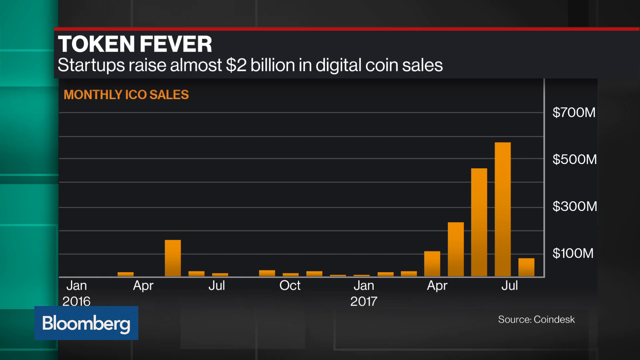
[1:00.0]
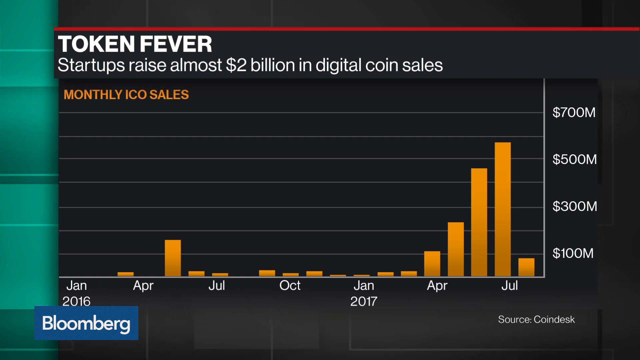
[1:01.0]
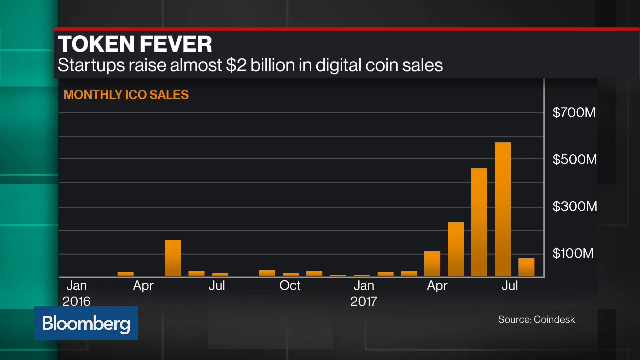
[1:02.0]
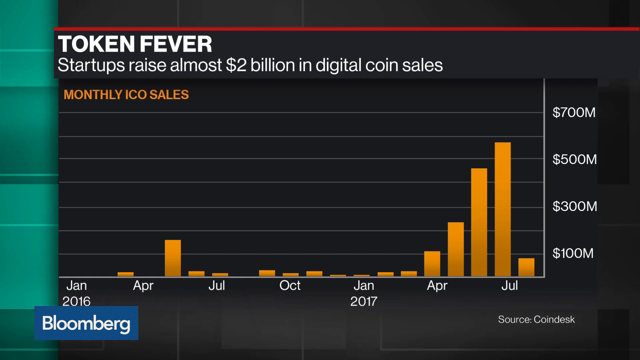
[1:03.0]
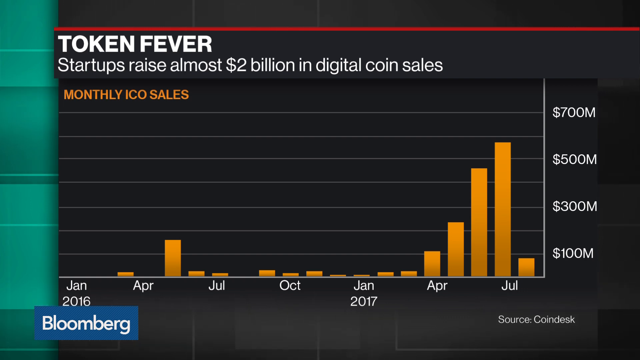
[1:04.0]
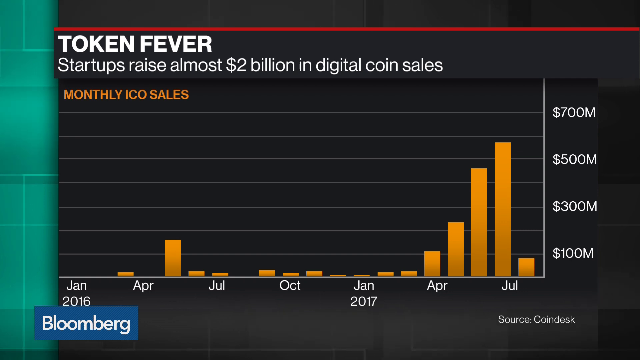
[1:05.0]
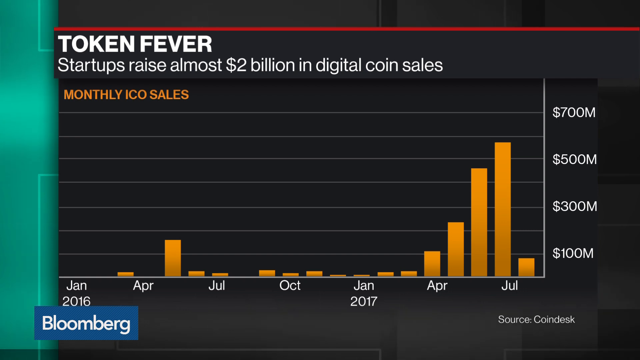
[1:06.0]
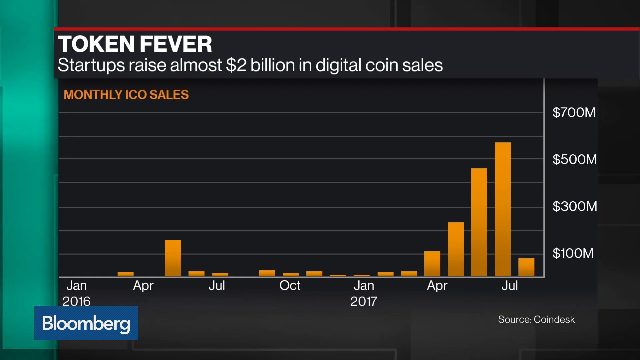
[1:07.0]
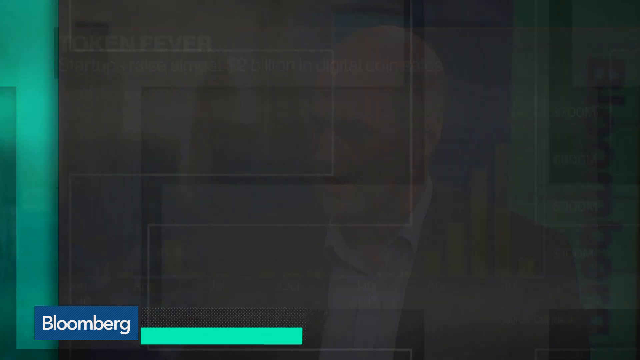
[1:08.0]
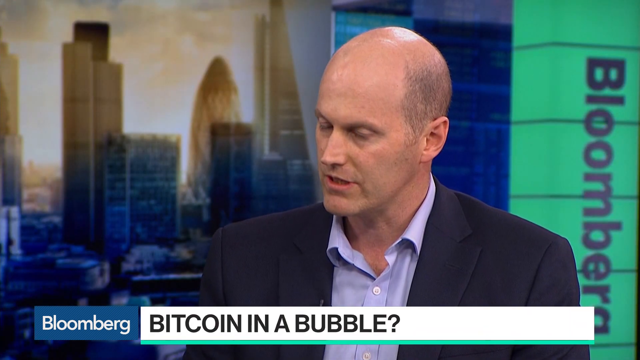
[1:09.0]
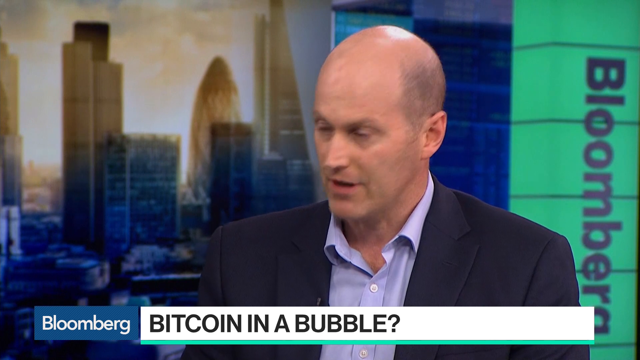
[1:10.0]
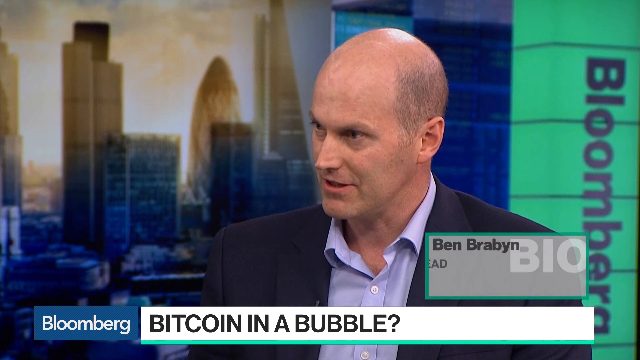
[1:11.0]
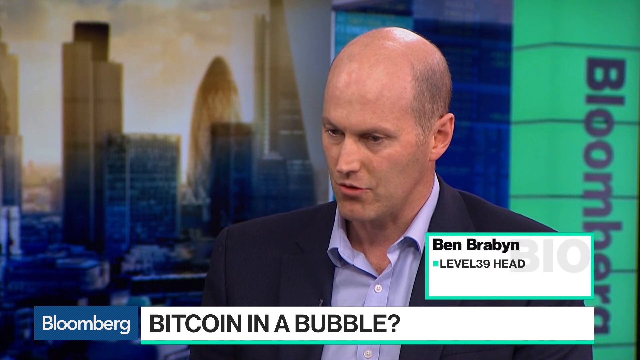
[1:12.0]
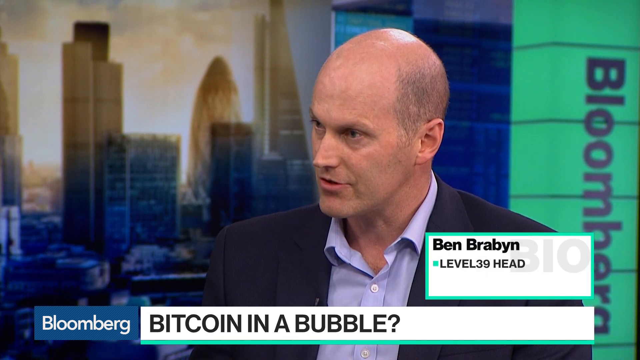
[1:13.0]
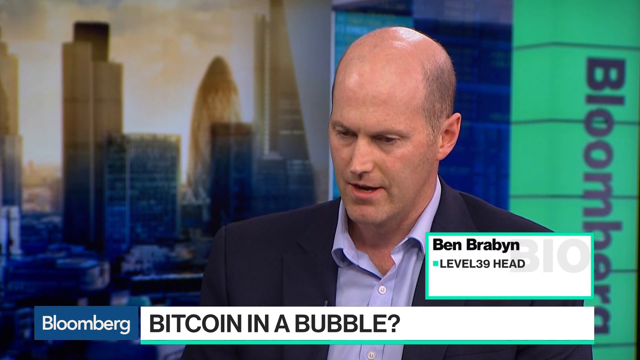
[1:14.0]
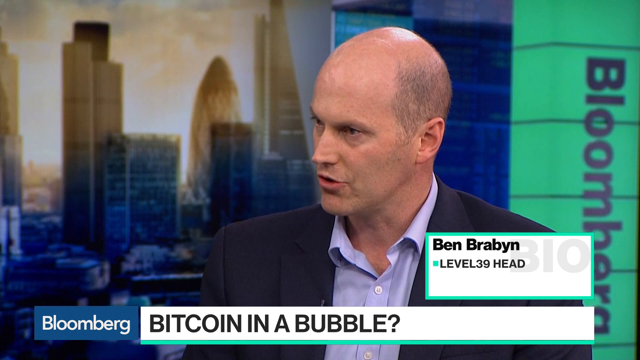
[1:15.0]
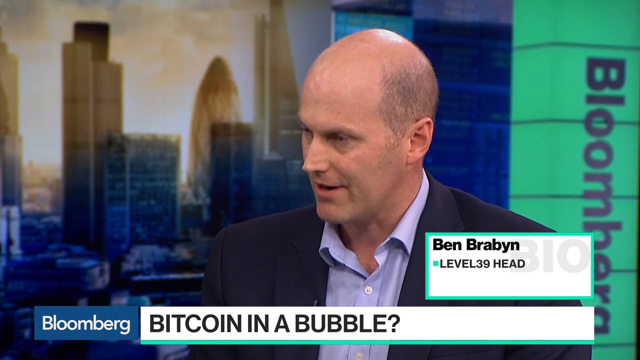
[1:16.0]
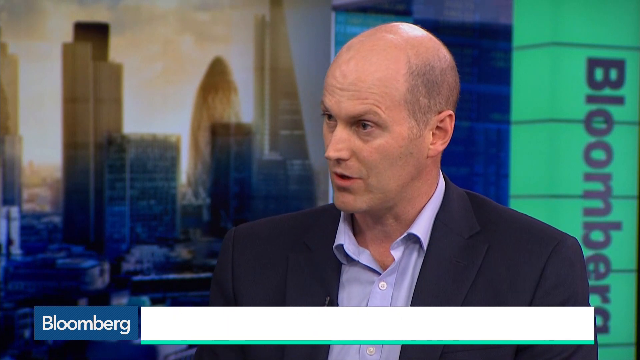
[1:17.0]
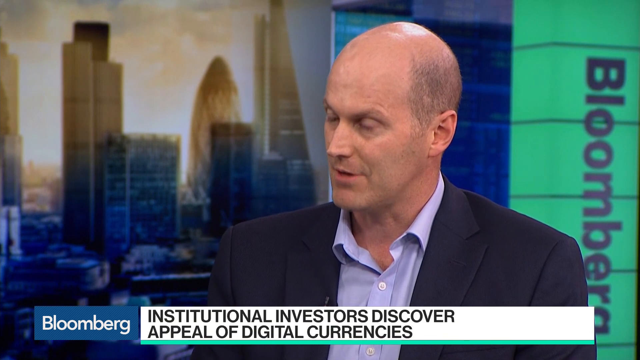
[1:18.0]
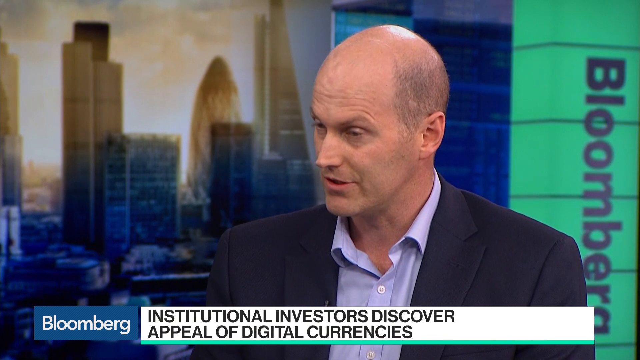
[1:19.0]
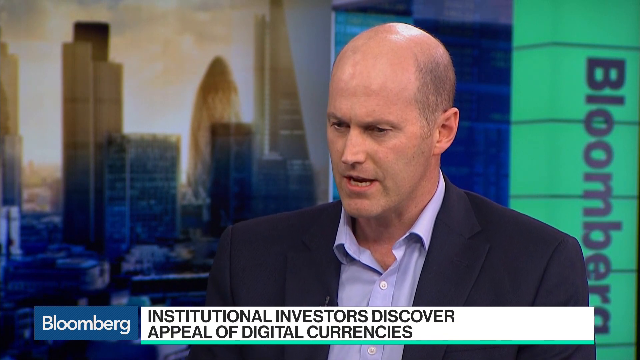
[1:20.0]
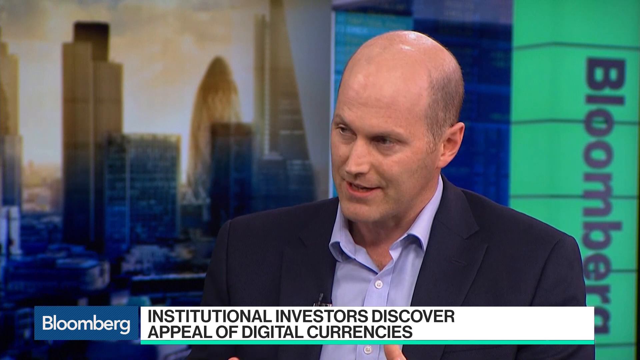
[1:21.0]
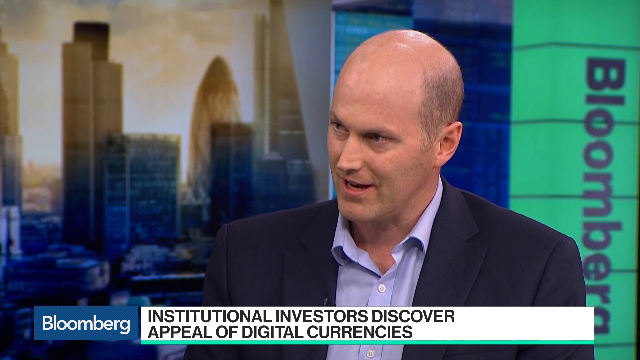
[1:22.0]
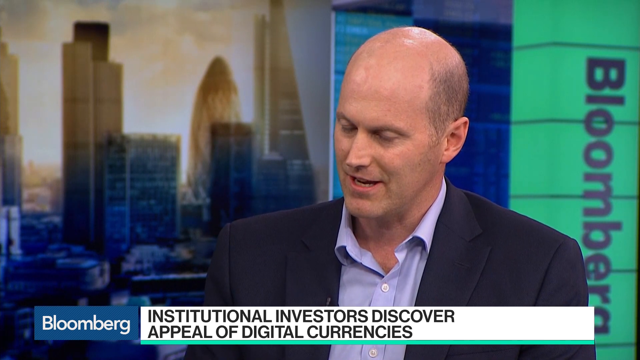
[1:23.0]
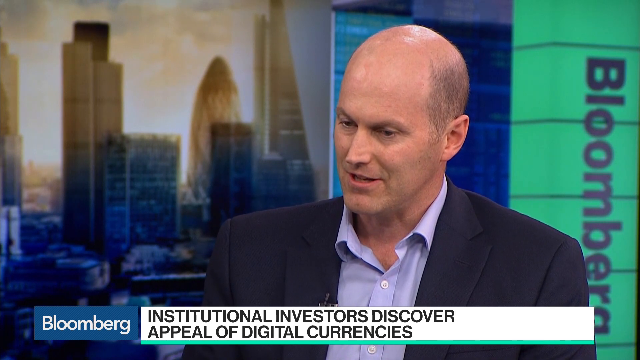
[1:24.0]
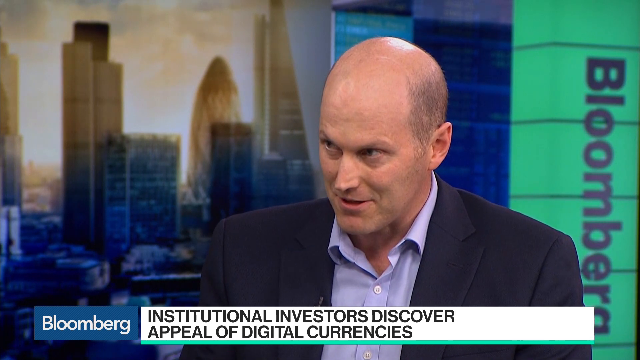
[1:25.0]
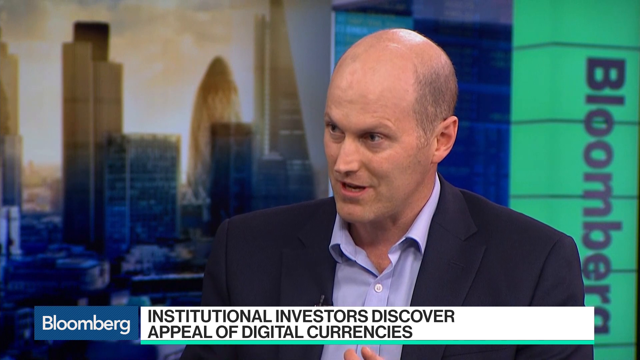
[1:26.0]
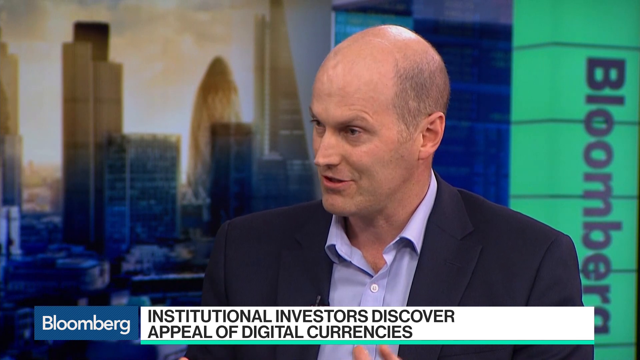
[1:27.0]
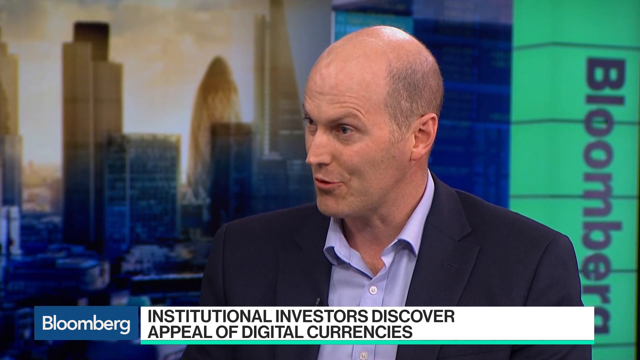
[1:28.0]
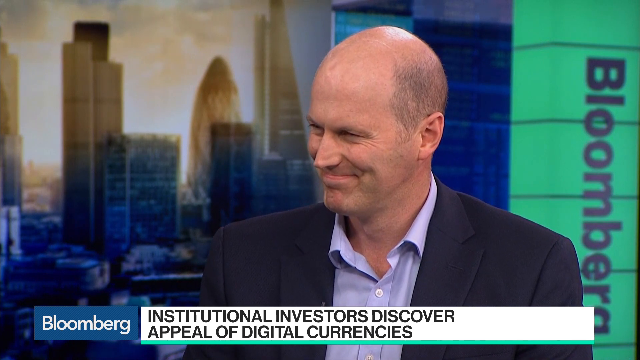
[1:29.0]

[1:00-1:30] The bar chart is shown with "token fever" in large letters and, below it, "startup raised almost 2 billion dollars in digital coin sales monthly ICO sales"; the chart still has money on its y-axis and months on its x-axis. The video quickly switches back to Ben Brabyn, who appears to still be in the news studio being interviewed and still appears to be talking, with his credential "Level 39 head" shown. Afterwards a caption below him reads "institutional investors discover appeal of digital currencies." The Bloomberg logo is still shown, and Ben Brabyn still seems to be in conversation, presumably with the woman interviewing him. The shot ends with a smug expression on his face.